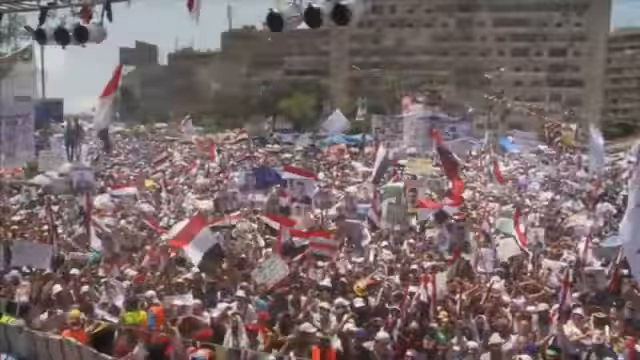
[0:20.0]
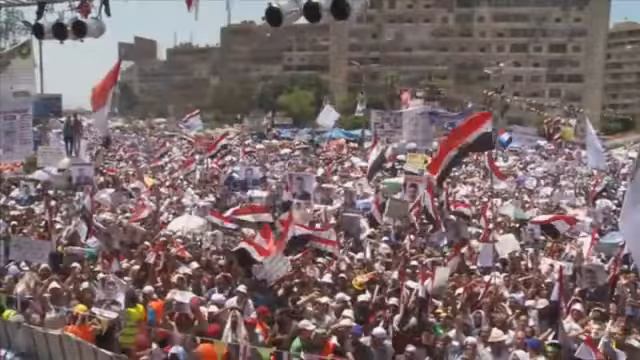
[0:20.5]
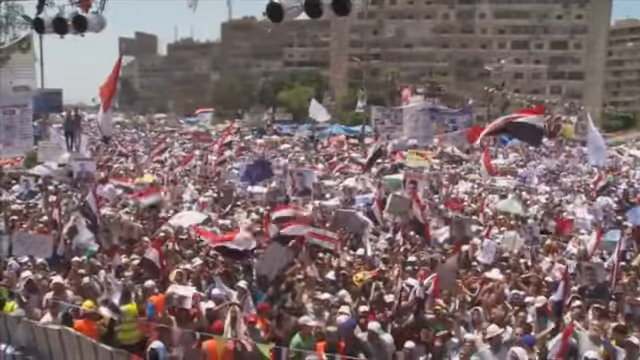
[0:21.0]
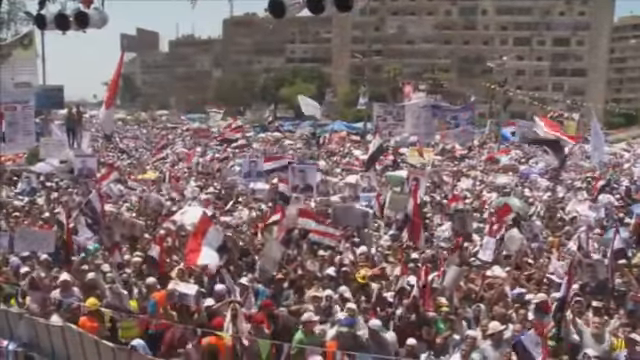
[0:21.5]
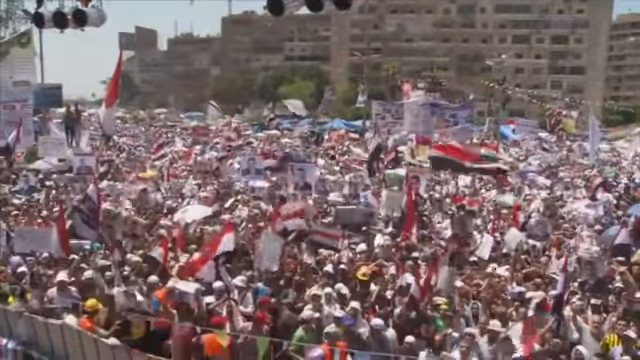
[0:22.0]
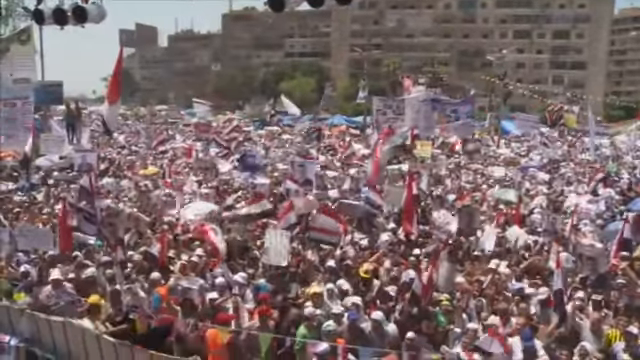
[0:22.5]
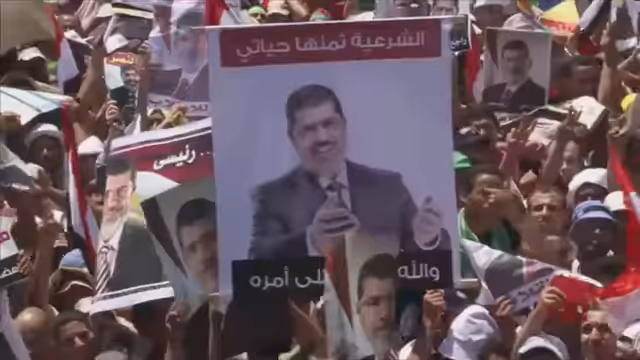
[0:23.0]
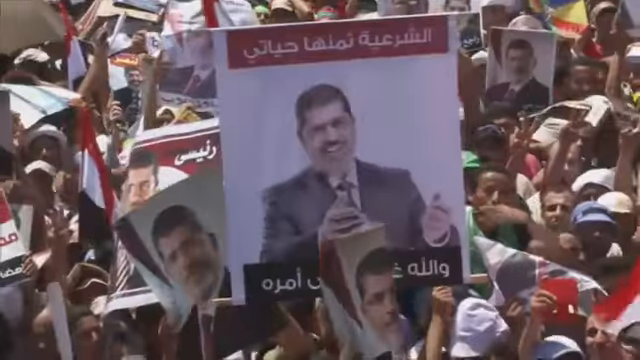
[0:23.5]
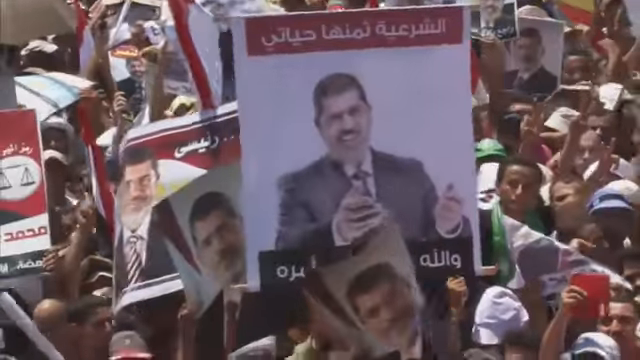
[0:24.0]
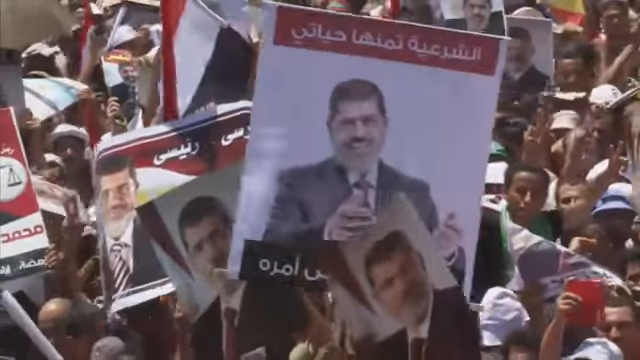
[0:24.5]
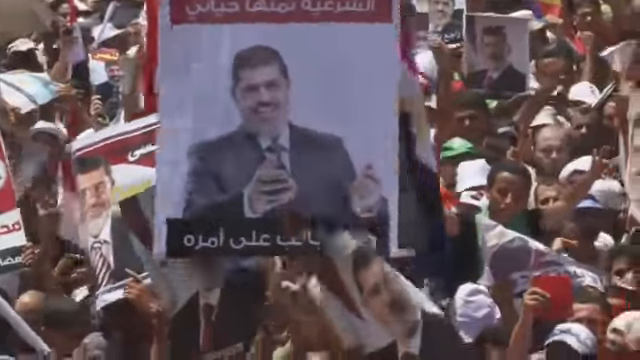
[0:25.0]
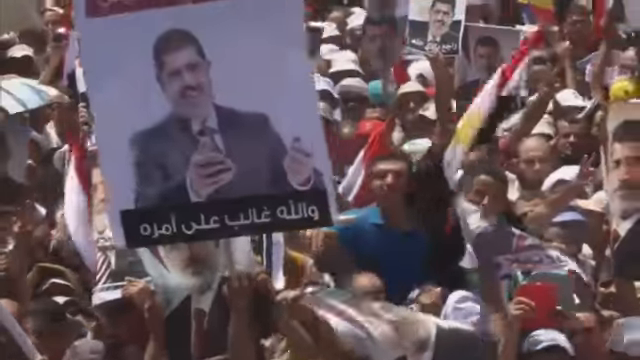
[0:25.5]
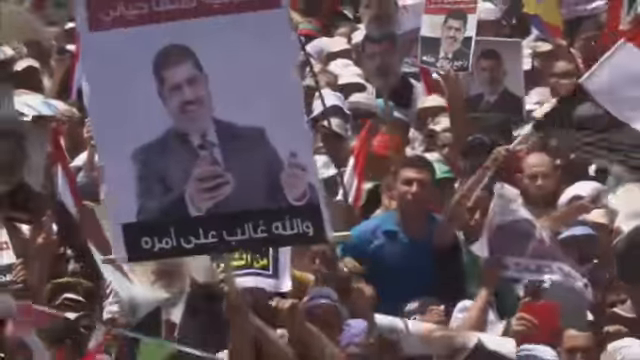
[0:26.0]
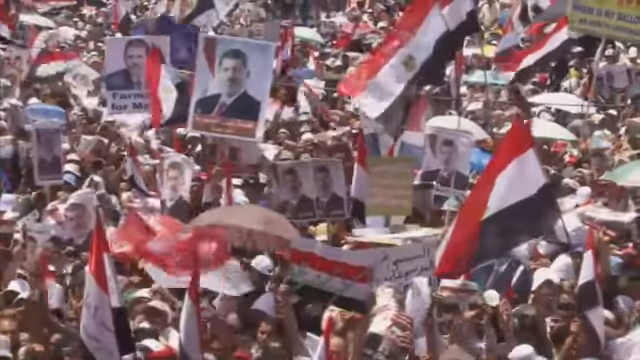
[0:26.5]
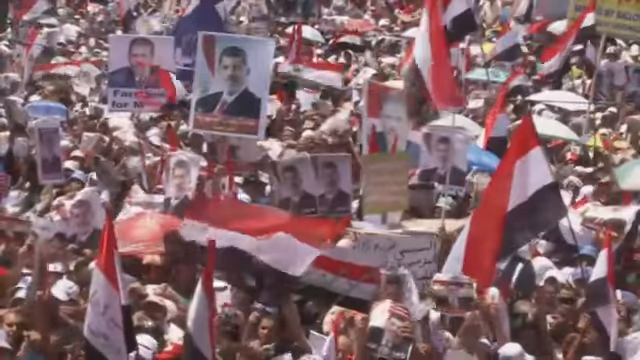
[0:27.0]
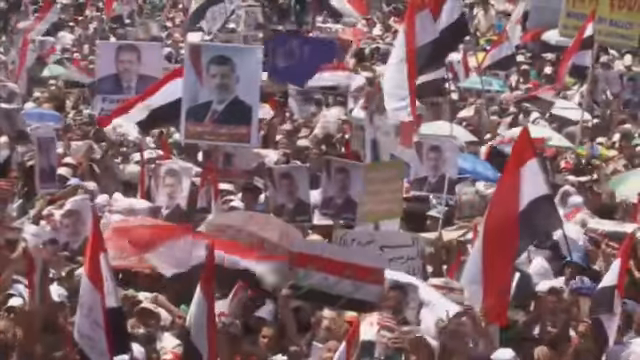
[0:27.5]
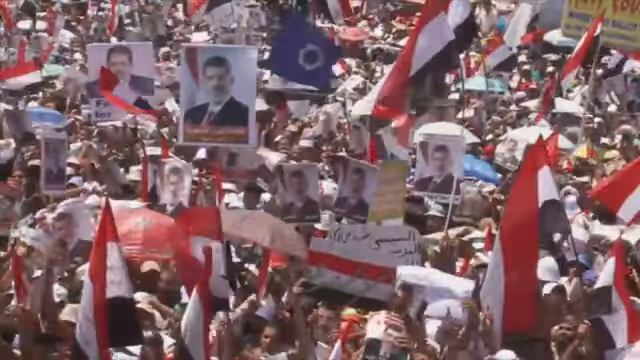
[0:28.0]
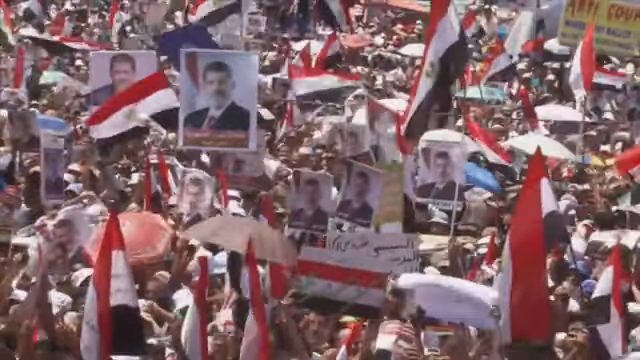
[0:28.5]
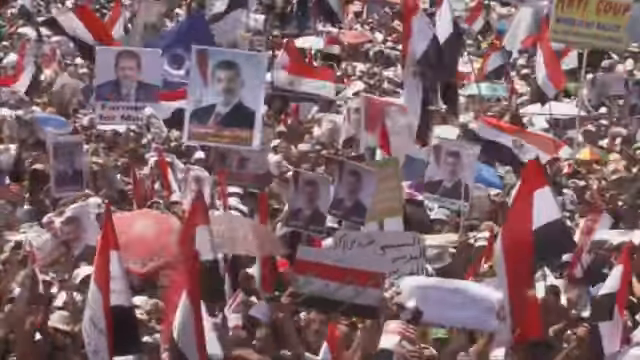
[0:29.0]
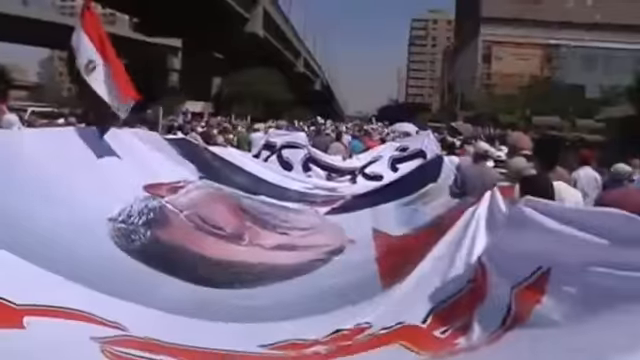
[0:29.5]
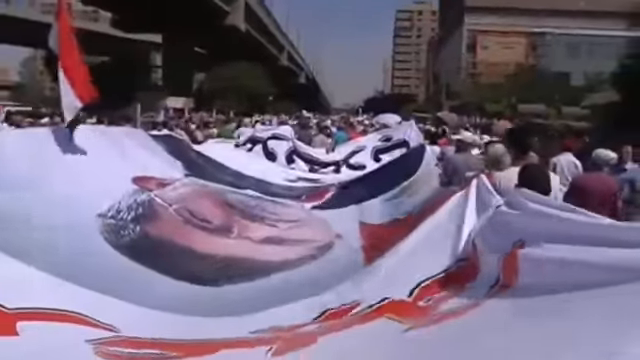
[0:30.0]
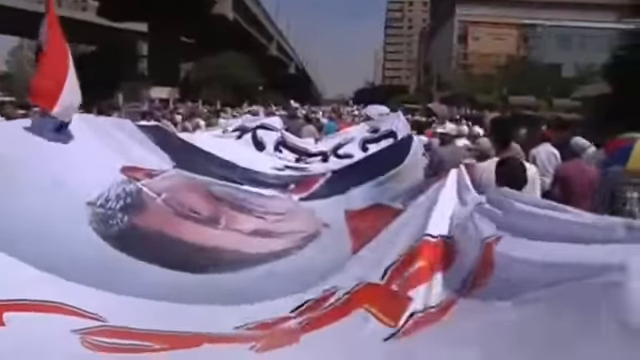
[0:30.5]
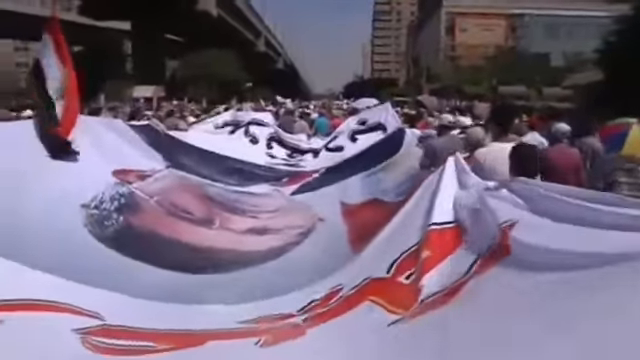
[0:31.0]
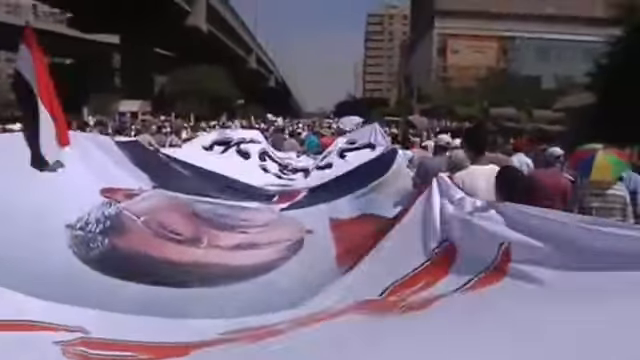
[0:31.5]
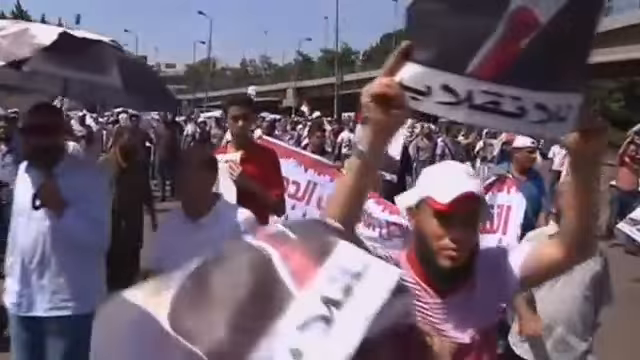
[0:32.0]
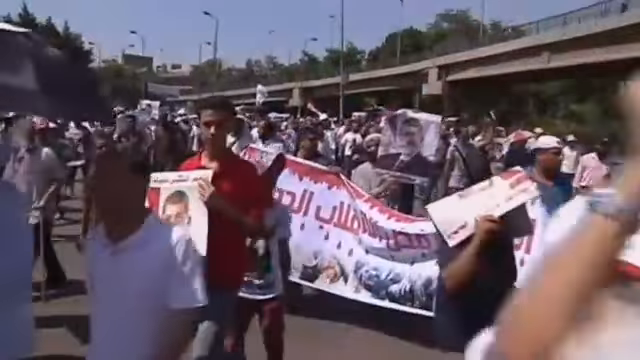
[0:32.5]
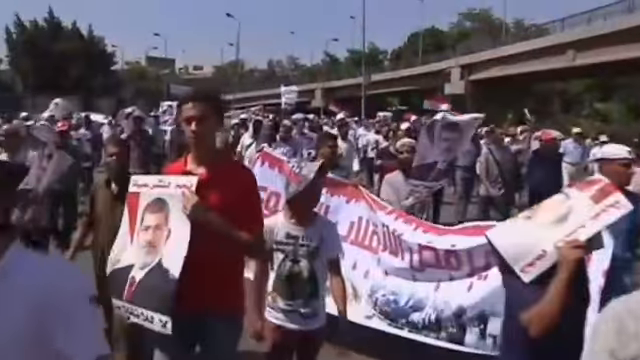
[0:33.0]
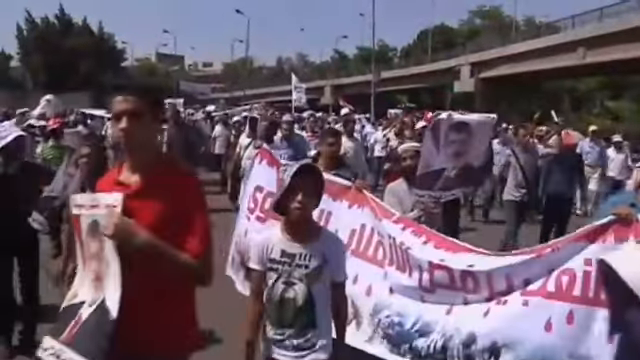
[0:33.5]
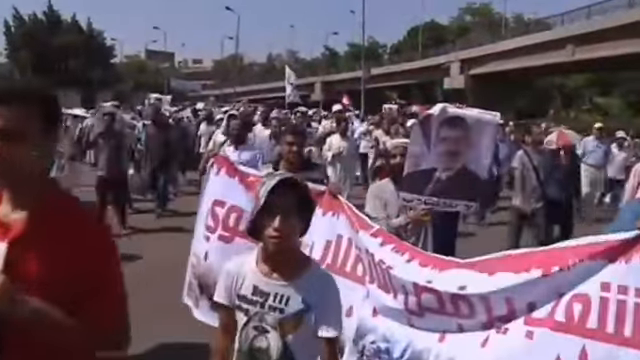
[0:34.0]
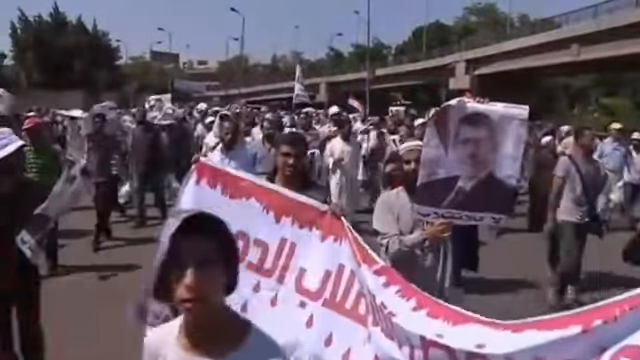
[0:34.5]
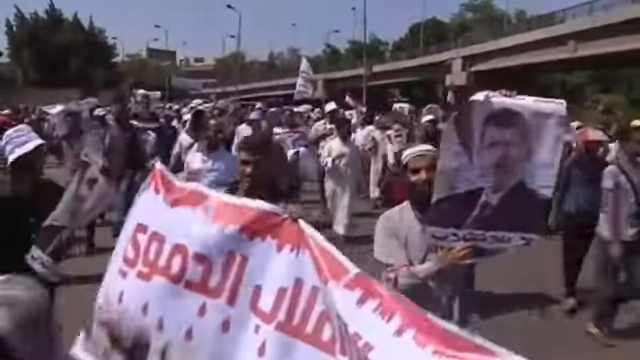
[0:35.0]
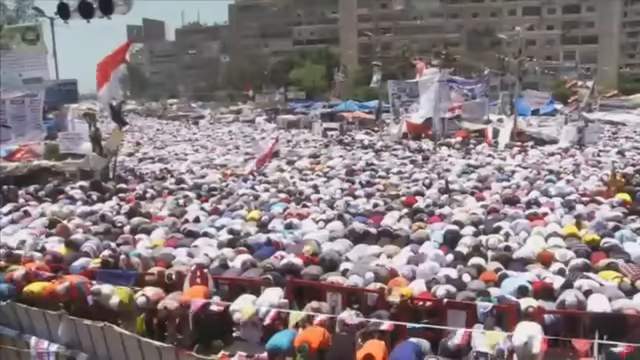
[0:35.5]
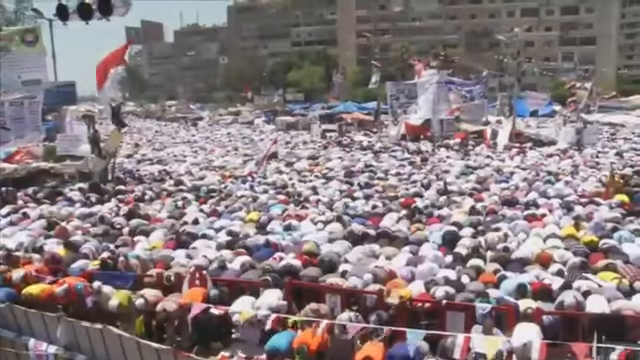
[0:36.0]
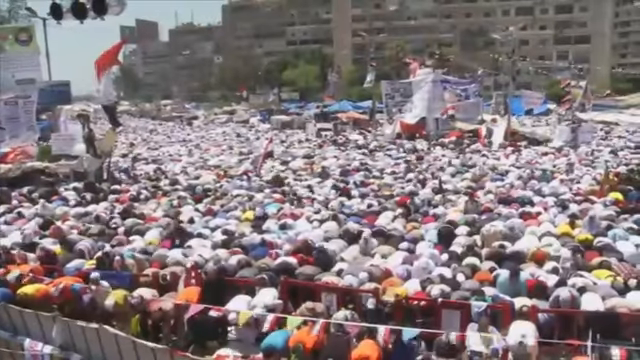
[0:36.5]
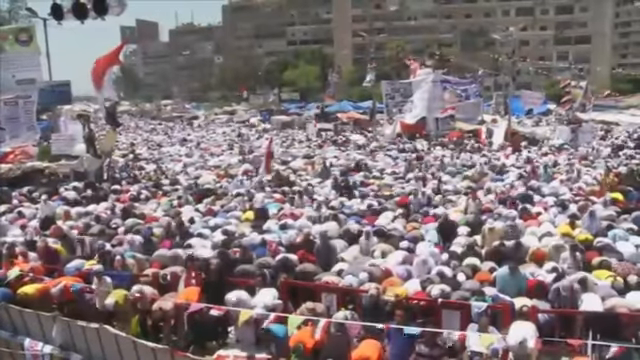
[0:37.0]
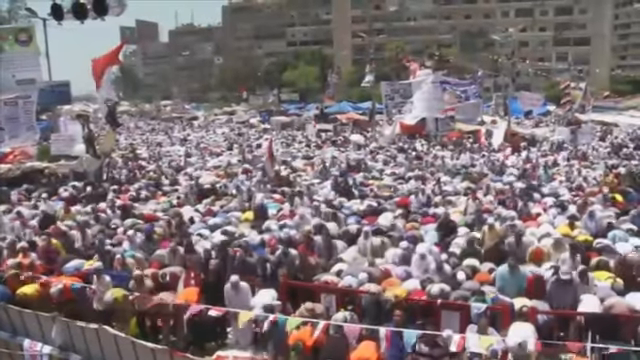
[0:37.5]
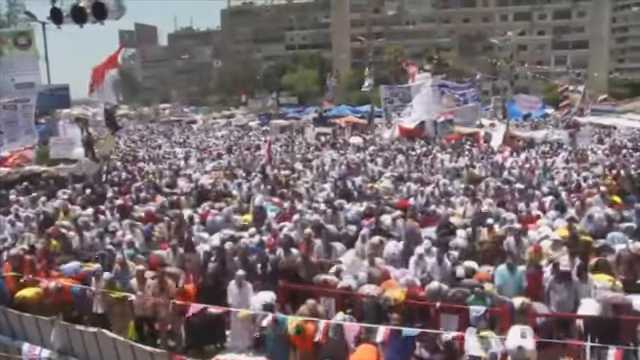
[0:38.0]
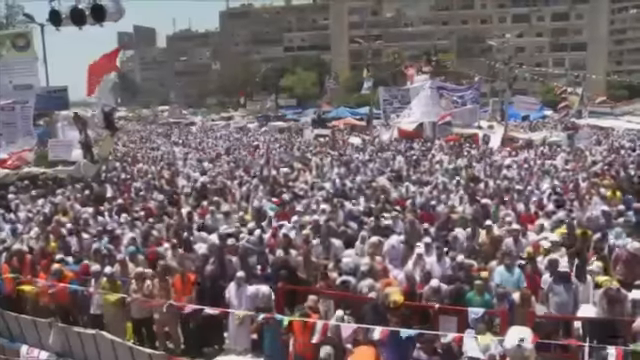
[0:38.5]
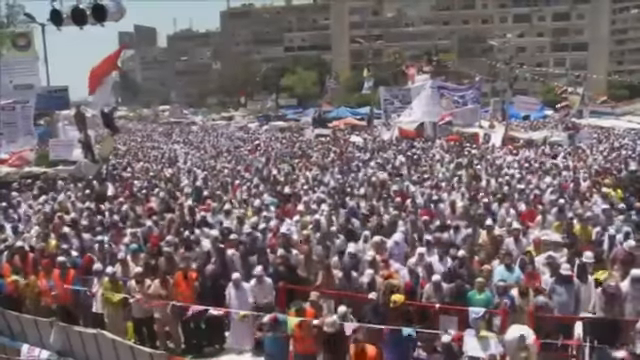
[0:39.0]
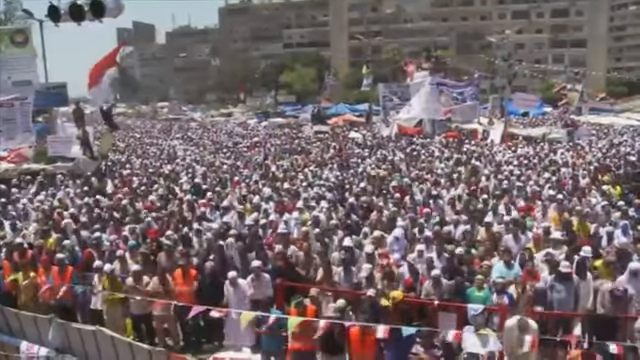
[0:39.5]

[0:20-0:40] The crowd of thousands continues with Egyptian flags and a picture, or a cardboard picture, of the president. A big flag is shown along with banners, and the gathering looks more like a protest. People hold postcards, and a public prayer takes place in a big open space, with the crowd praying.